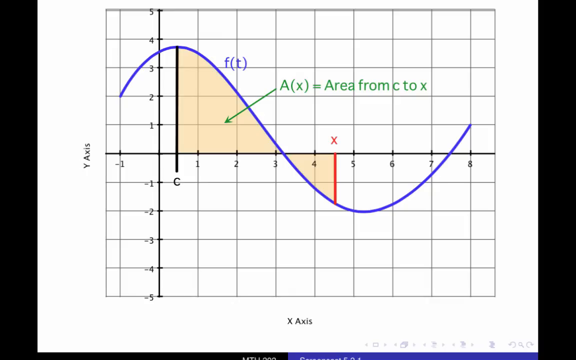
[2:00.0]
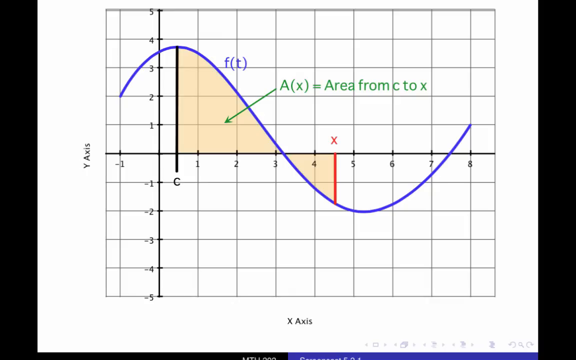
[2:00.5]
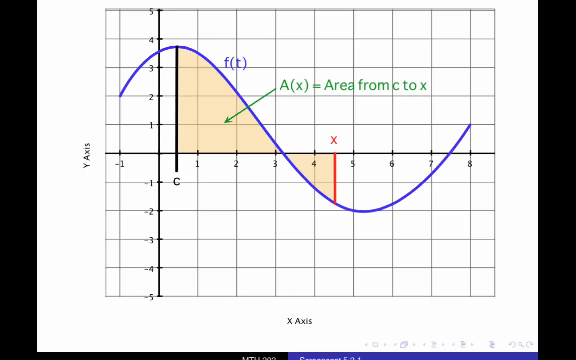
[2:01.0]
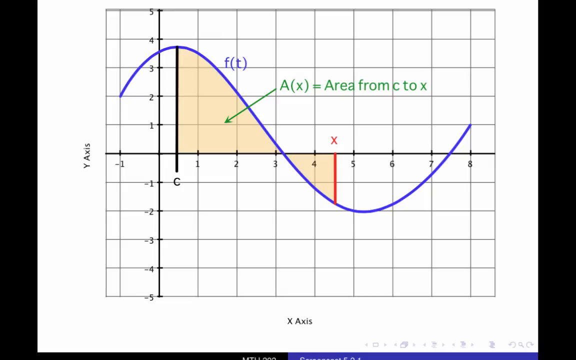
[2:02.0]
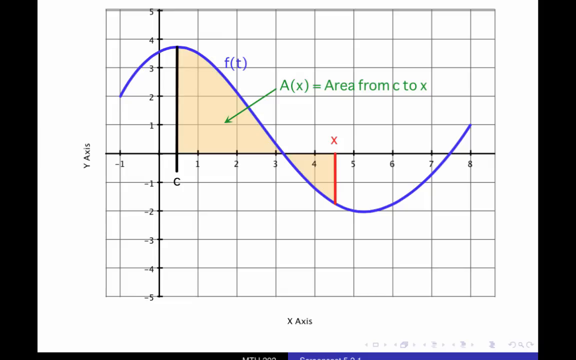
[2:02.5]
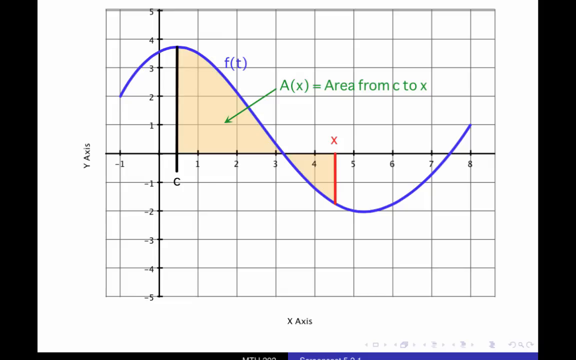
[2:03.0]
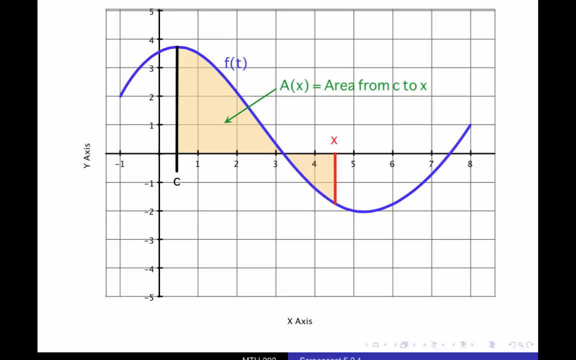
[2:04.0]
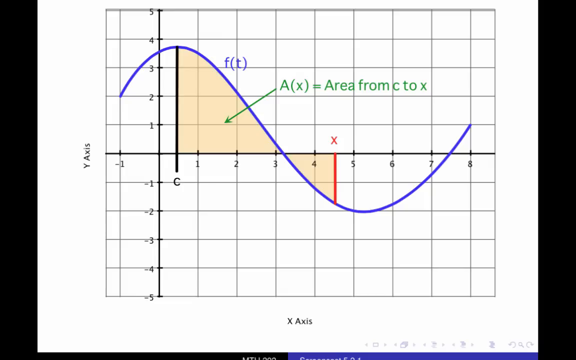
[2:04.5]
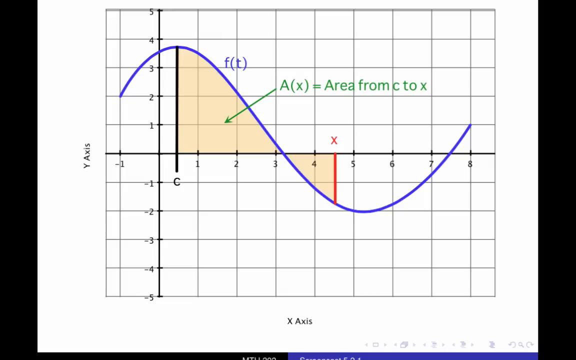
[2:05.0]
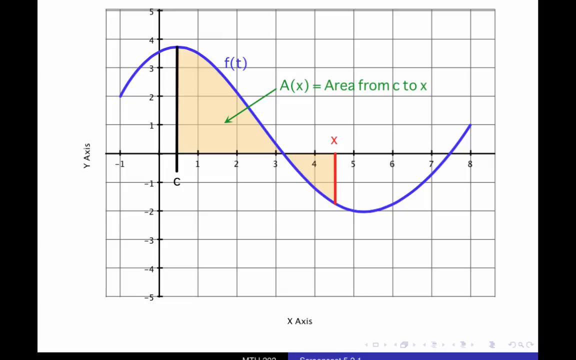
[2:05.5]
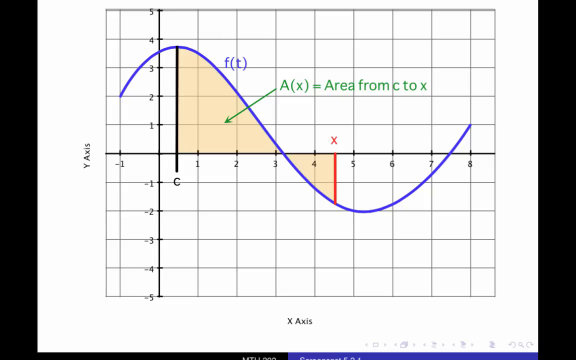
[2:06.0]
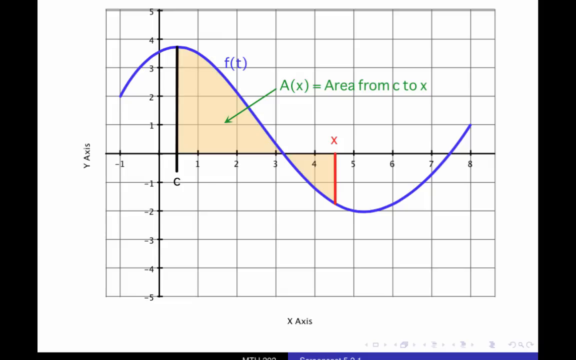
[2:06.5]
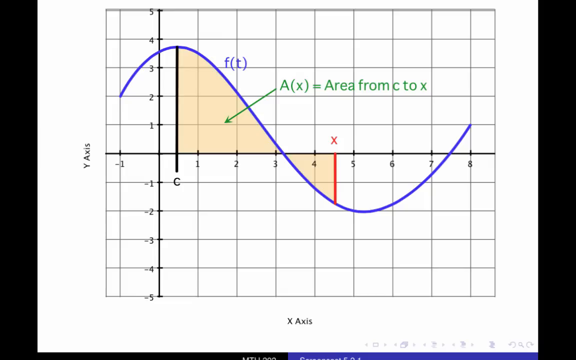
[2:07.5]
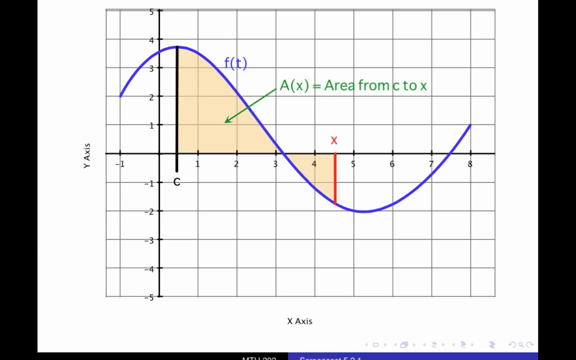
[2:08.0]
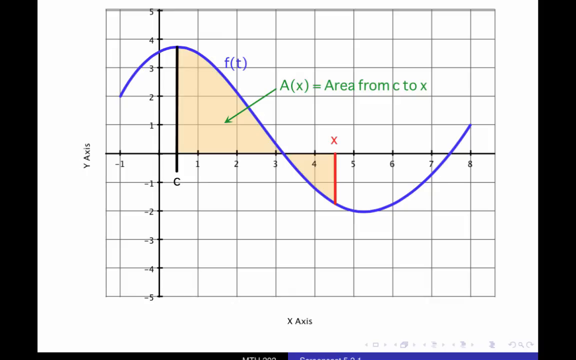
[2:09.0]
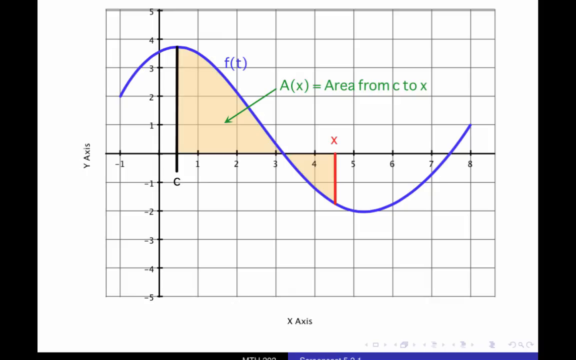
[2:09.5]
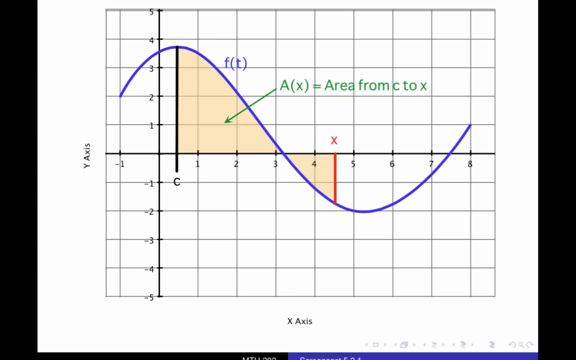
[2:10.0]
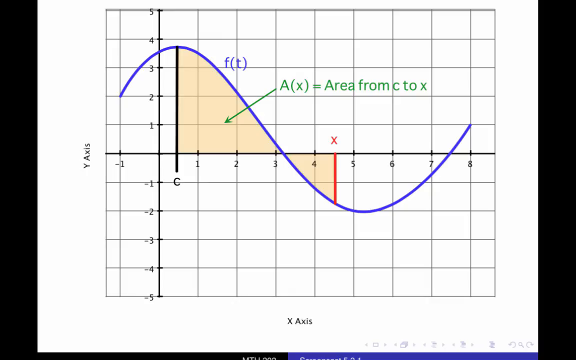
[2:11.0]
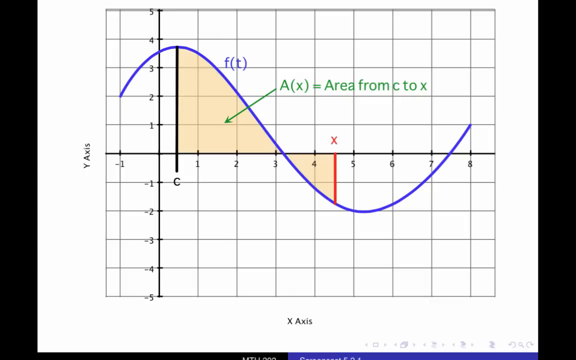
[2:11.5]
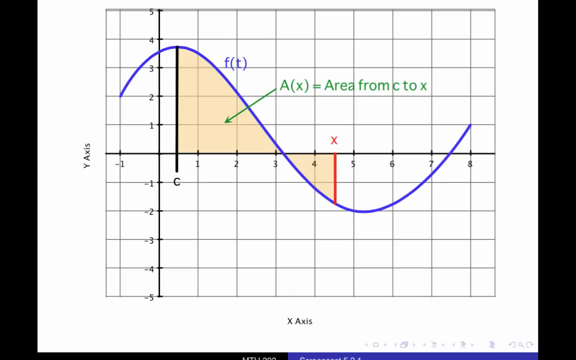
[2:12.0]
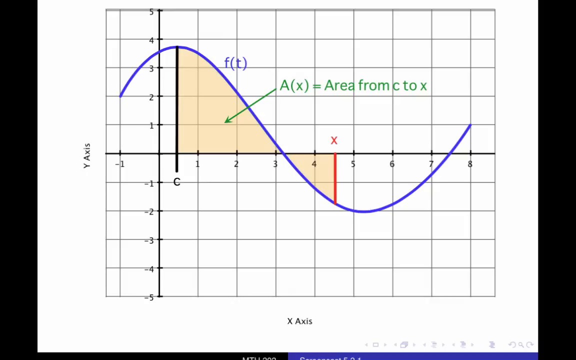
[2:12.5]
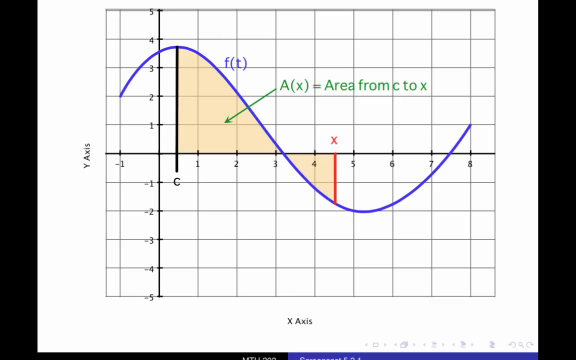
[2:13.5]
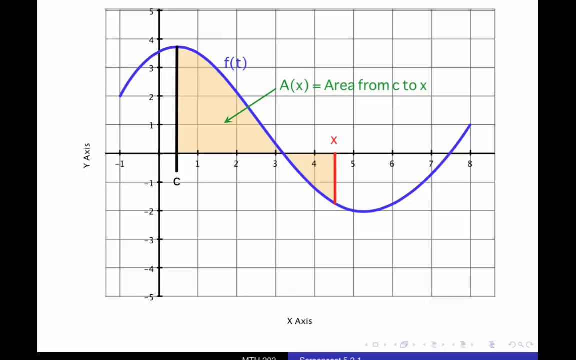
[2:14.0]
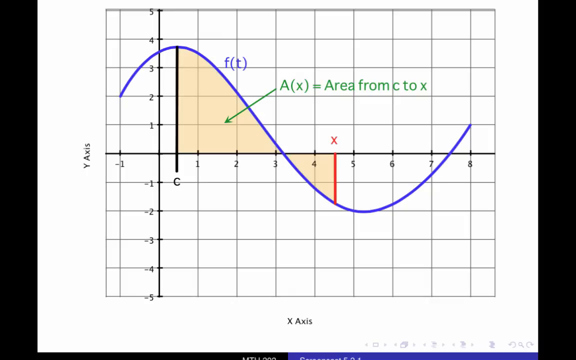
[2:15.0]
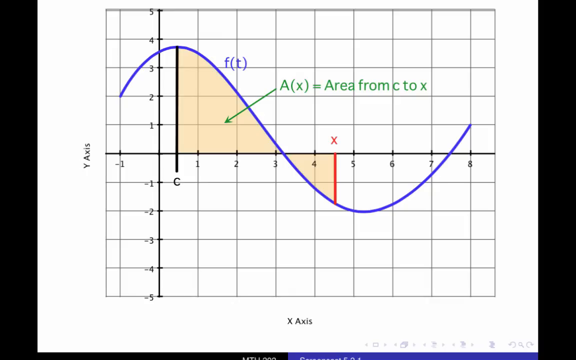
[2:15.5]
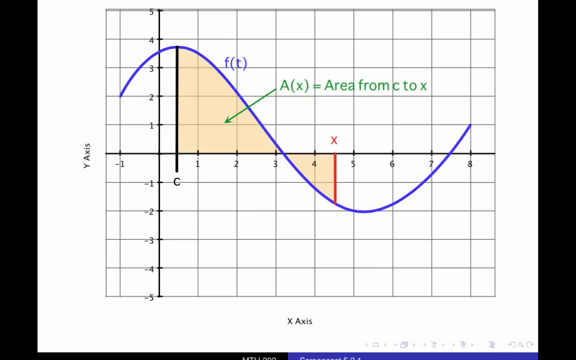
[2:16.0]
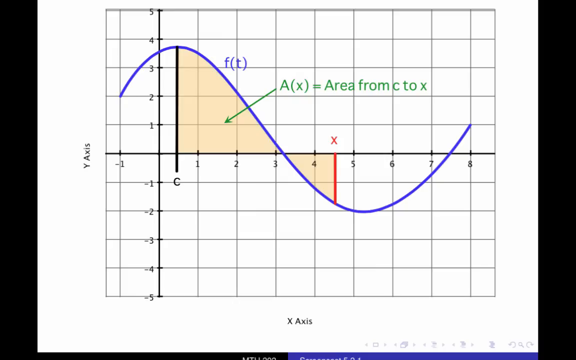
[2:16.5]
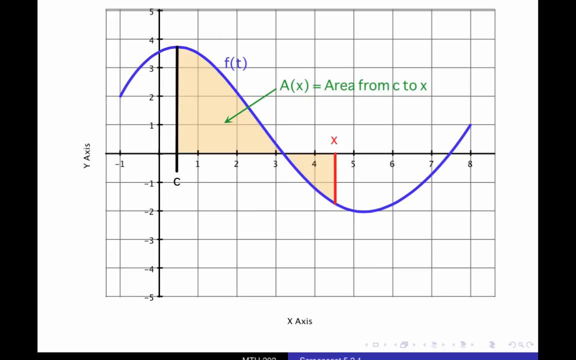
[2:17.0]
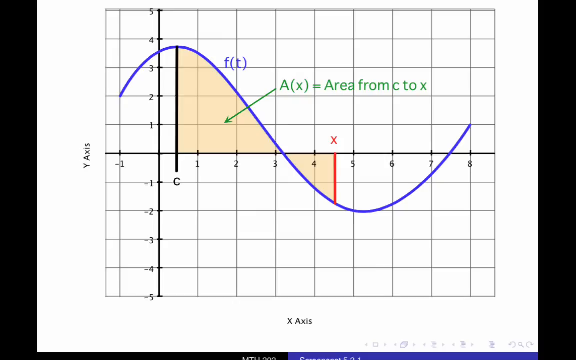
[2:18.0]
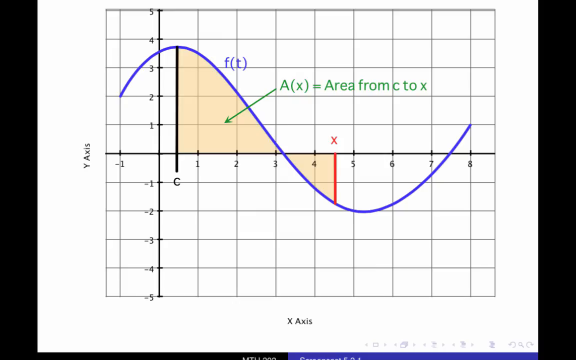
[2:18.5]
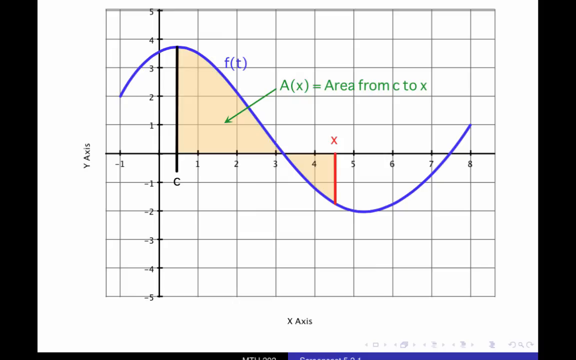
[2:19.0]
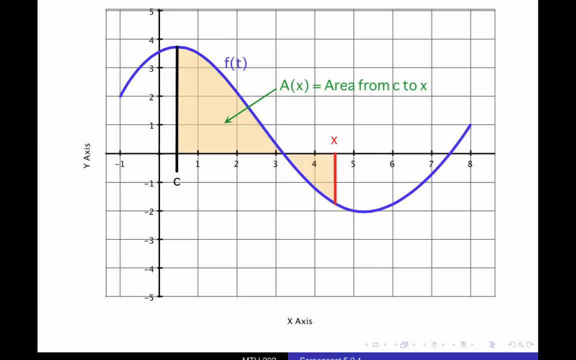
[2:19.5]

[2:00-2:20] A graph tracking multiple elements stays on screen, with part of a cut-off, illegible taskbar at the bottom of the screen. The tracked elements are labeled "F(T)" and "A(X) = area from C to X", which has a green line pointing to the area created by the curved line of F(T). X is marked at (4.5, 0.5). F(T) starts at (-1, 2) and ends at (8, 1), forming a curve with a high point and a low point; the high point is also C, labeled (0.5, 3.8). The area between C and X is shaded in beige and labeled "A(X) = area from C to X". The x-axis runs from -1 to 8 and the y-axis from -5 to 5.